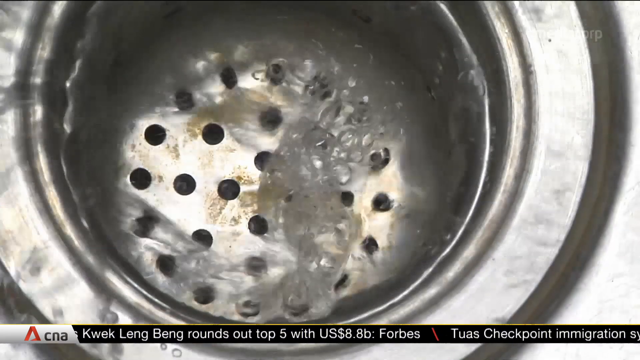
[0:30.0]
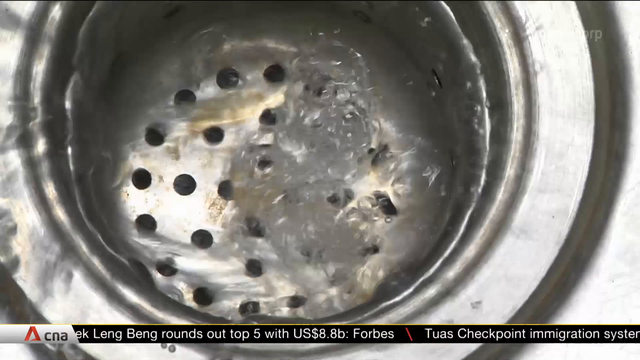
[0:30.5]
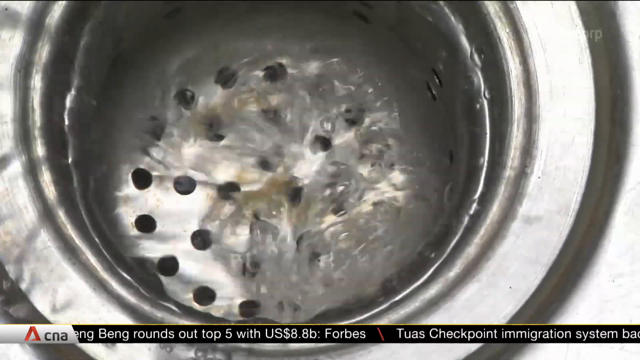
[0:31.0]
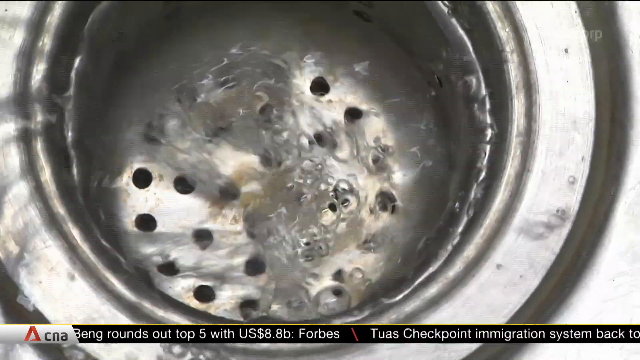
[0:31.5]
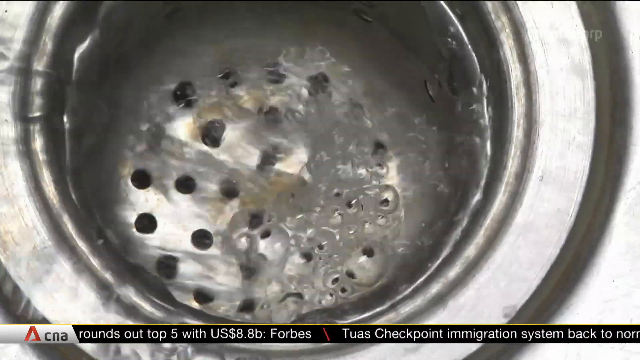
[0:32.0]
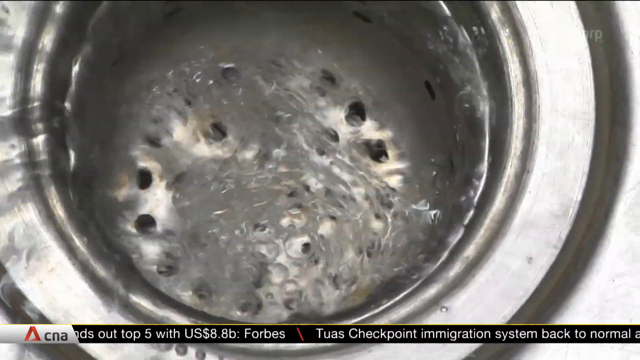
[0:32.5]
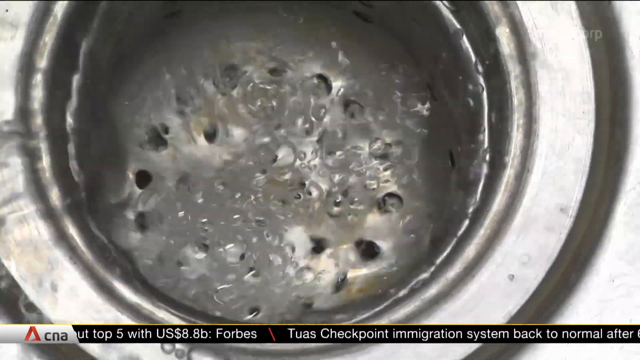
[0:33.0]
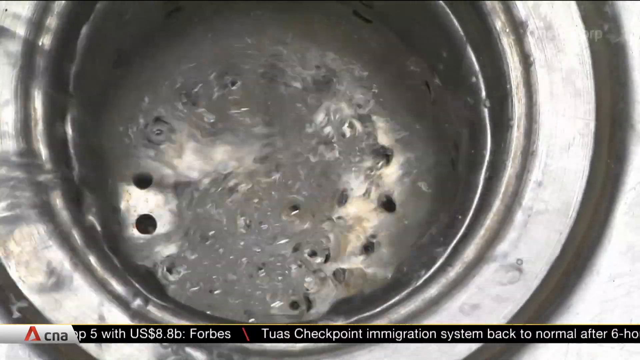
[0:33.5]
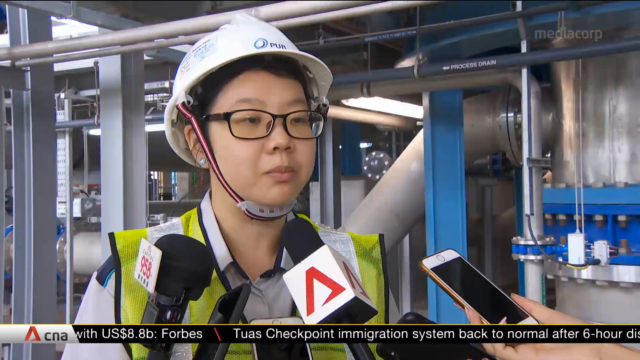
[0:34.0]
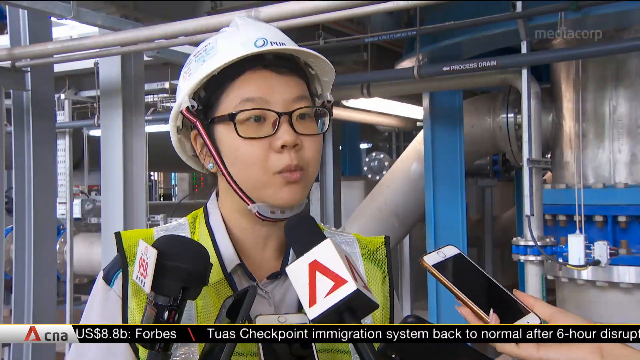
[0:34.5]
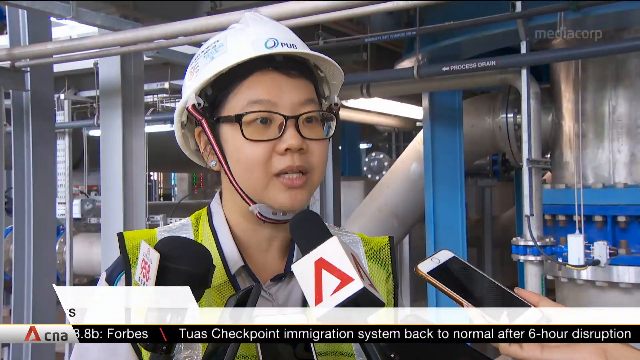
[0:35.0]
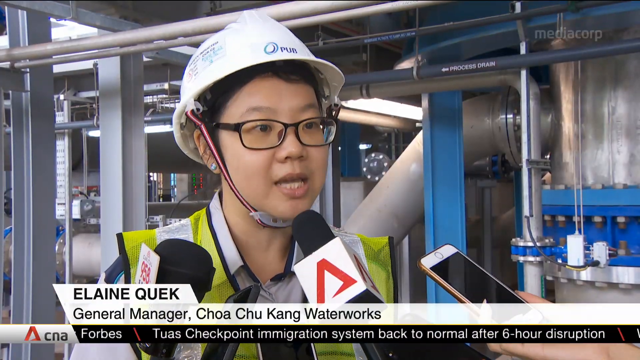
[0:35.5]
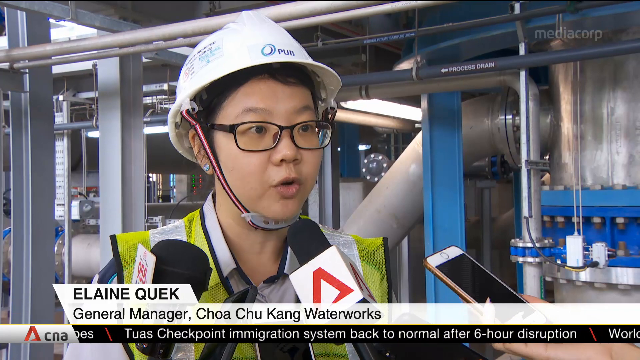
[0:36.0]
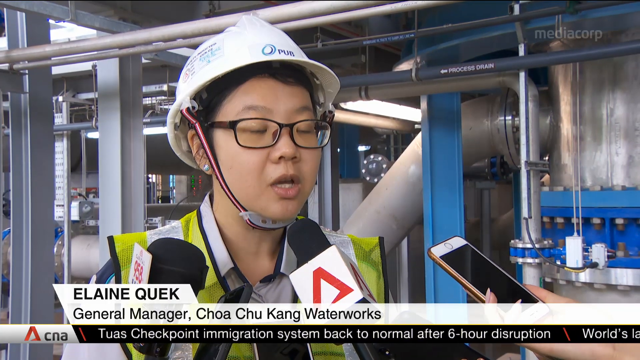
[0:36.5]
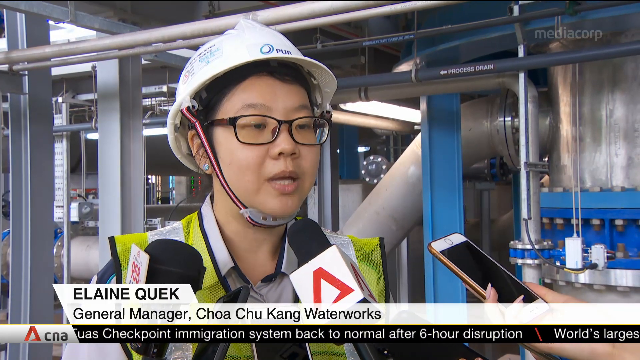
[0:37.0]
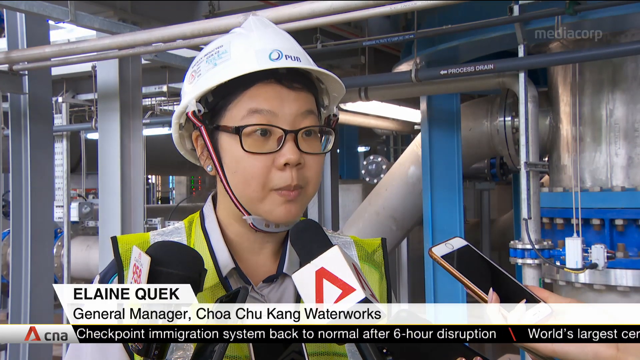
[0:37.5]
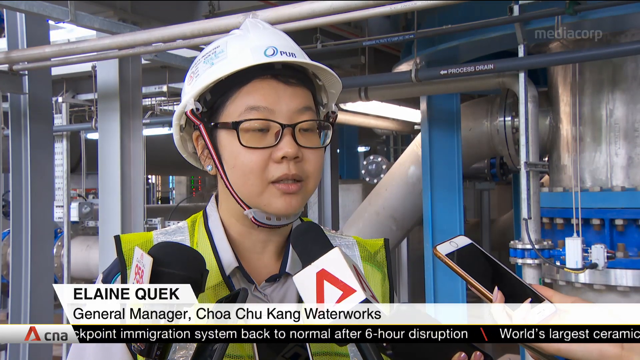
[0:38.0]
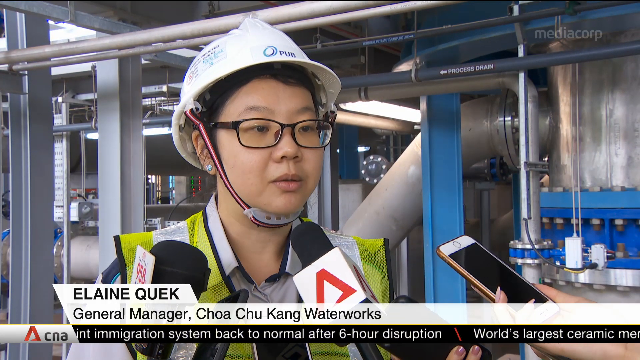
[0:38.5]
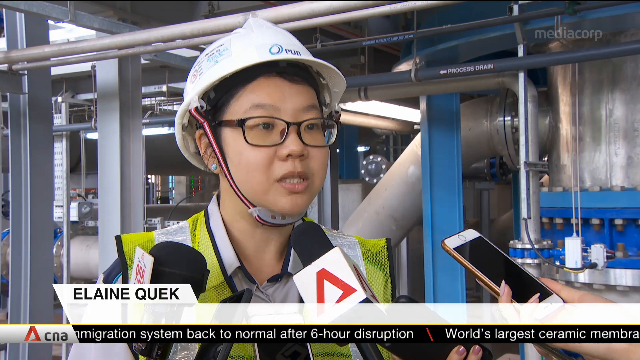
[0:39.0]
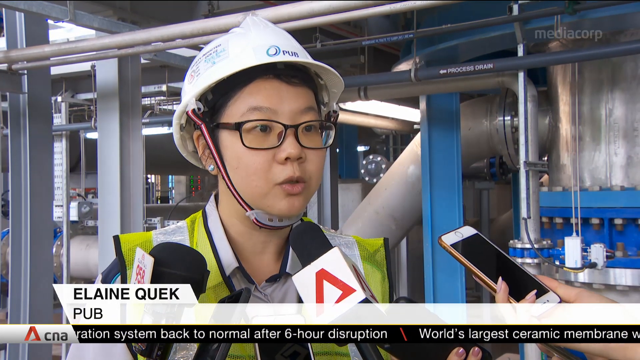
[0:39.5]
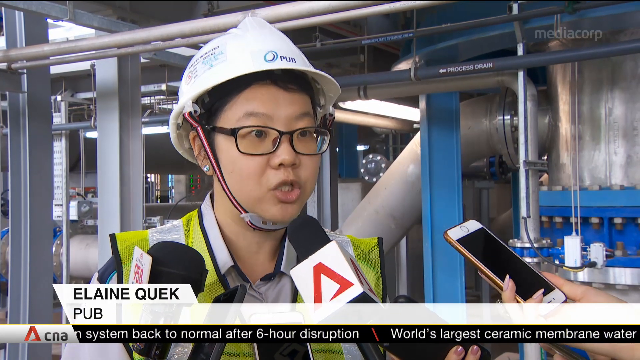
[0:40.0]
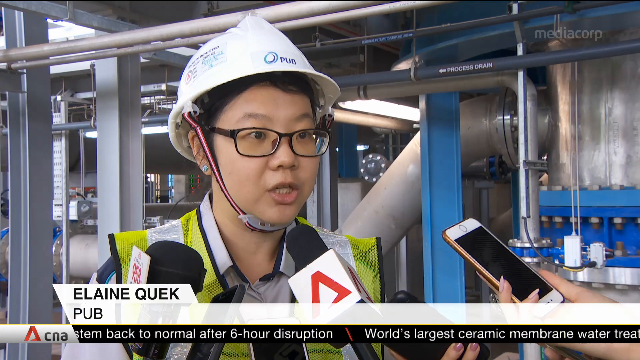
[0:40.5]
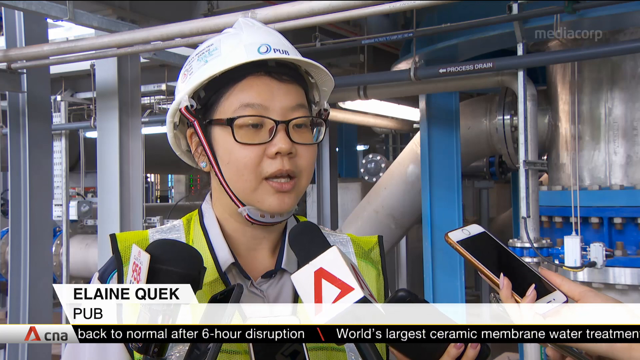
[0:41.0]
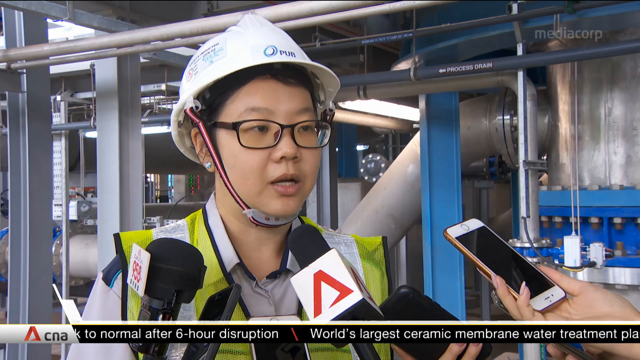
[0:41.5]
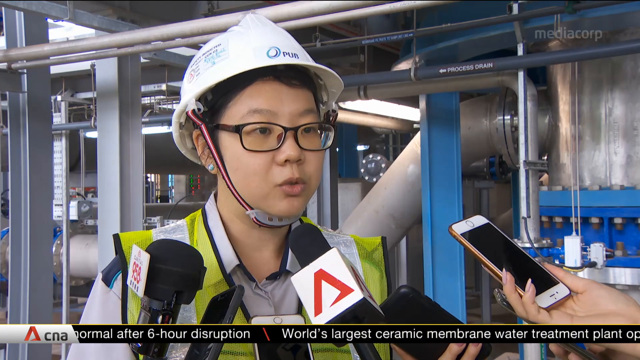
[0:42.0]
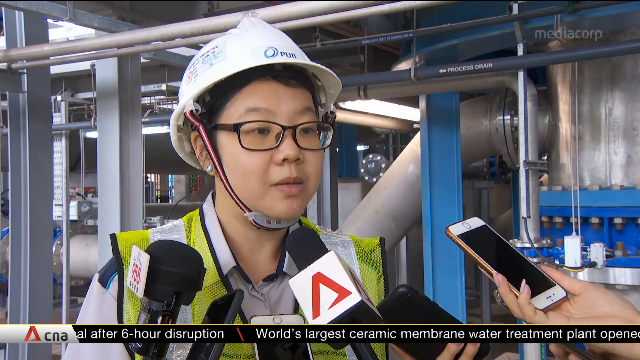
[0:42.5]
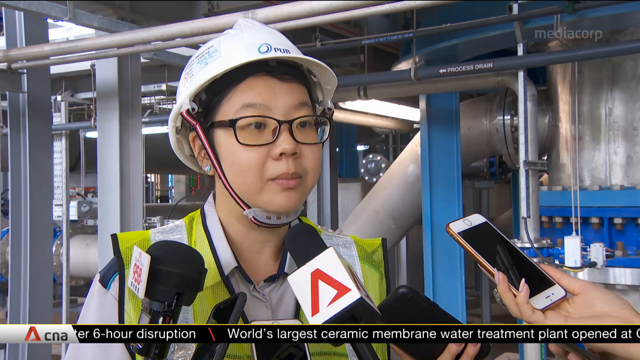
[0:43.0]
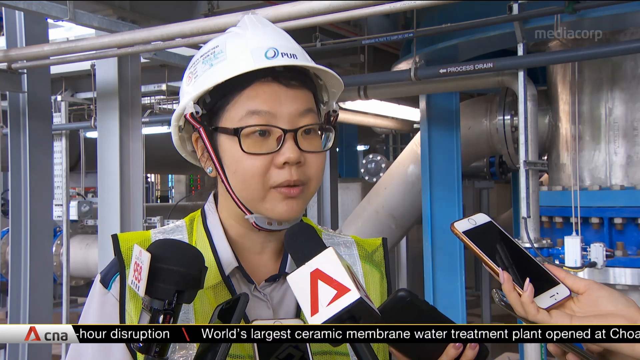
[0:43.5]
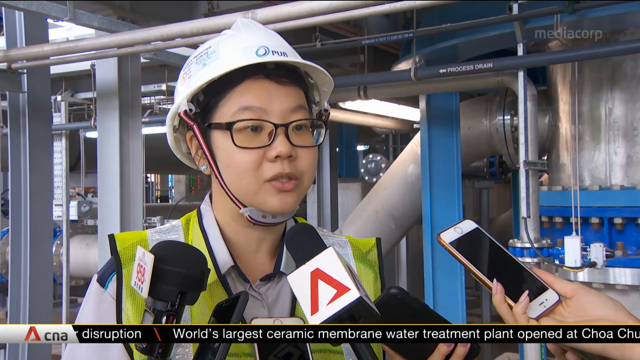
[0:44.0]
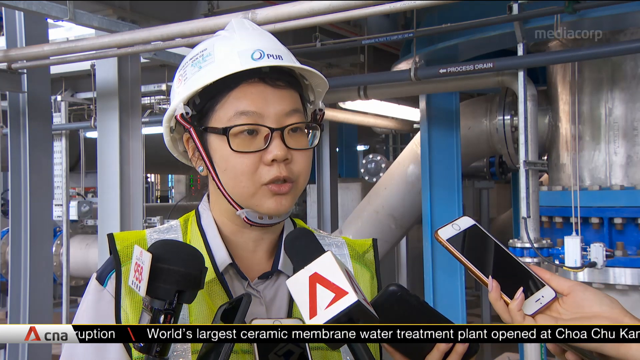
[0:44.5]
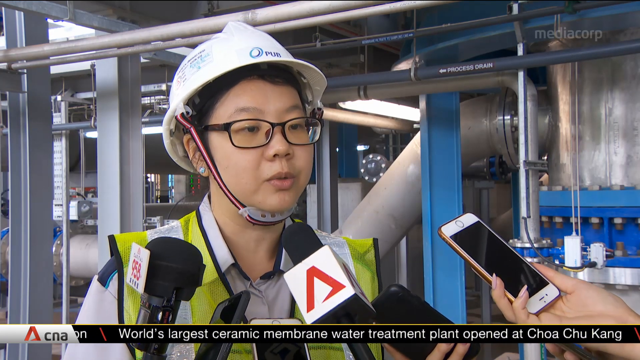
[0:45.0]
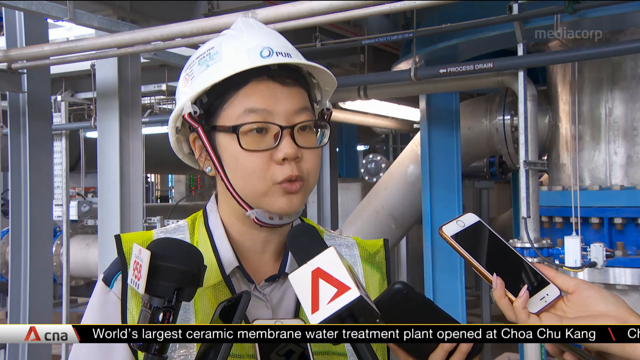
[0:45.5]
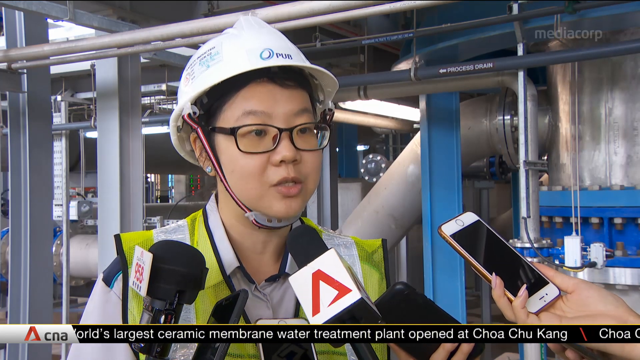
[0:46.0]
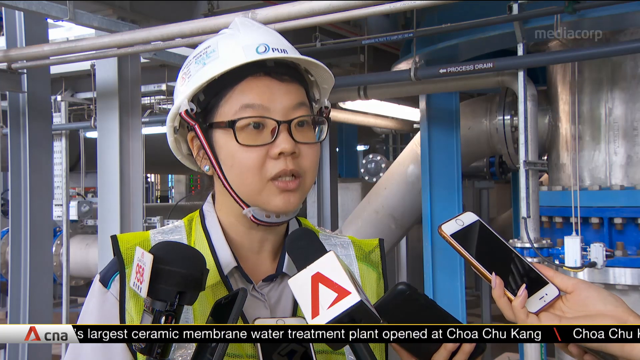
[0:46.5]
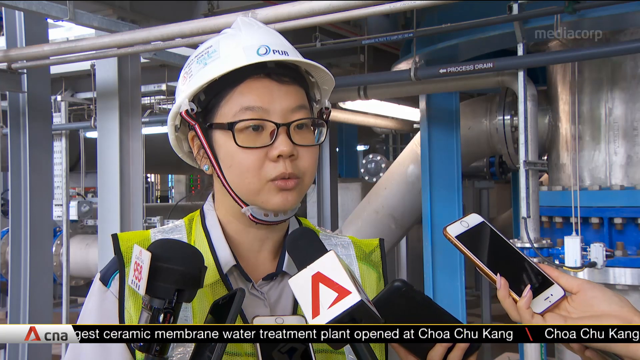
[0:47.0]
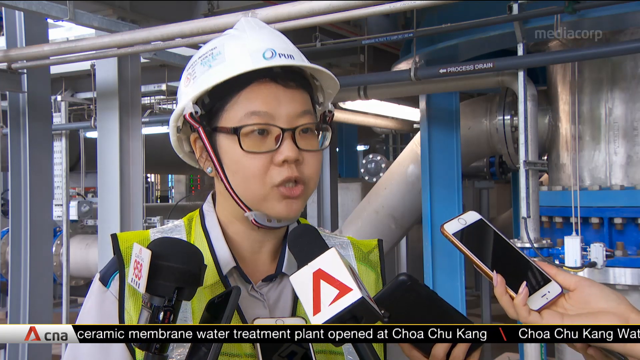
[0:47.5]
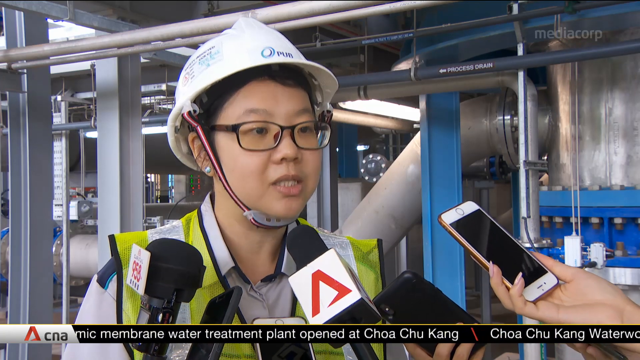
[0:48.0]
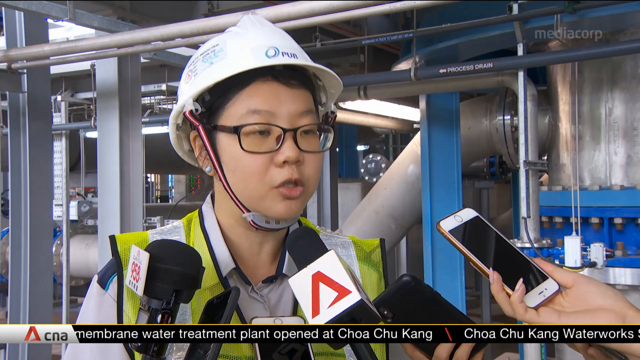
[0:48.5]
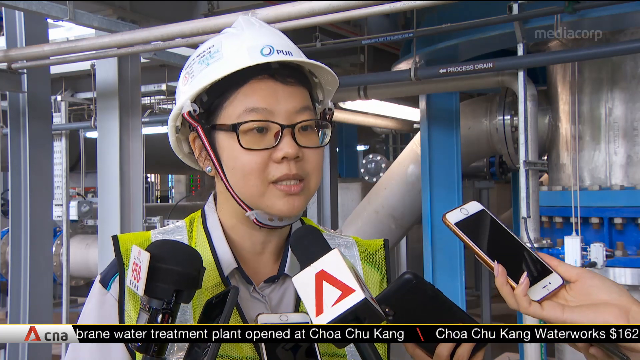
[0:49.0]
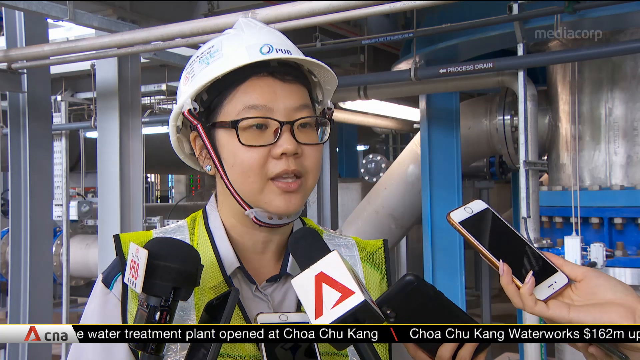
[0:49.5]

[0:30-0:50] Water runs down the sink drain for several seconds. The scene then cuts to a factory or industrial plant, with lots of metal pipes and girders in the background on the left and blue machinery on the right. There, a woman is being interviewed; she wears a white hard hat with a striped chin strap, brown-framed glasses, and a uniform with a high-vis vest. Two microphones with different logos are in front of her, and the interviewer's hands holding his phone out are visible in the right corner of the screen. Black letters on a white background at the bottom of the screen identify her as Elaine Quek, central manager at the Choa Chu Kang Waterworks. She nods her head as she answers questions and appears calm, confident and relaxed.